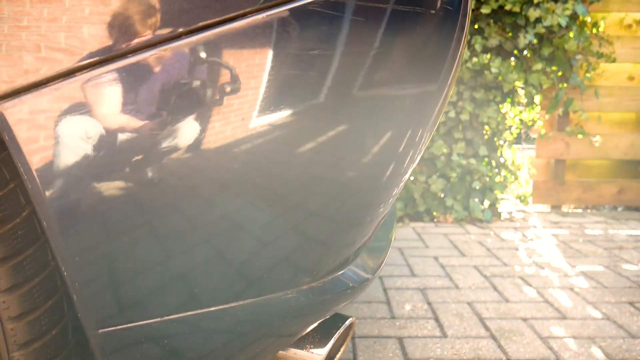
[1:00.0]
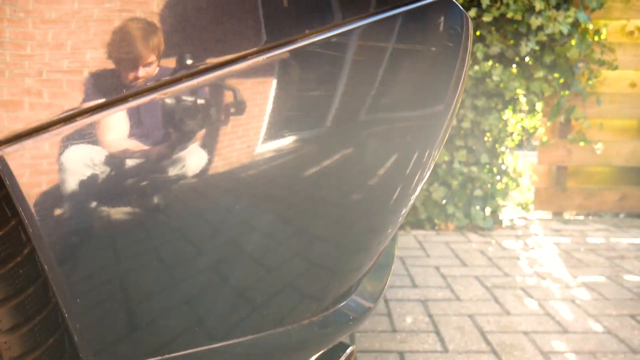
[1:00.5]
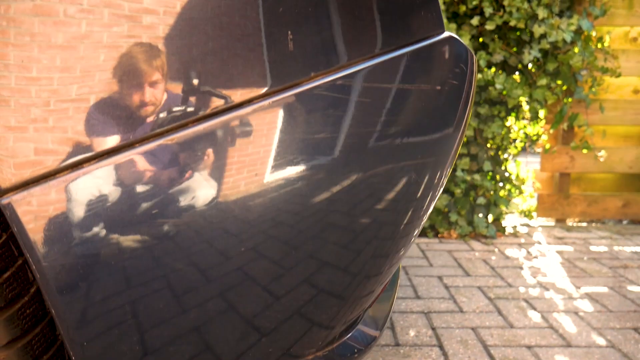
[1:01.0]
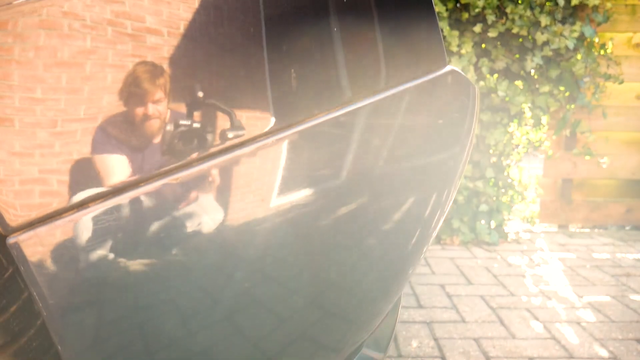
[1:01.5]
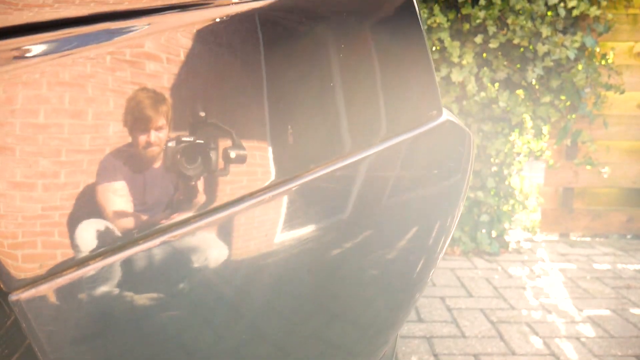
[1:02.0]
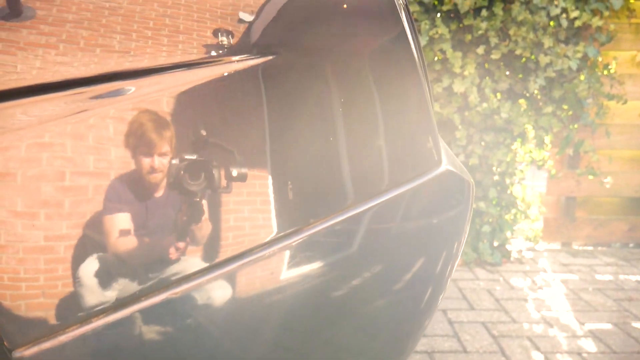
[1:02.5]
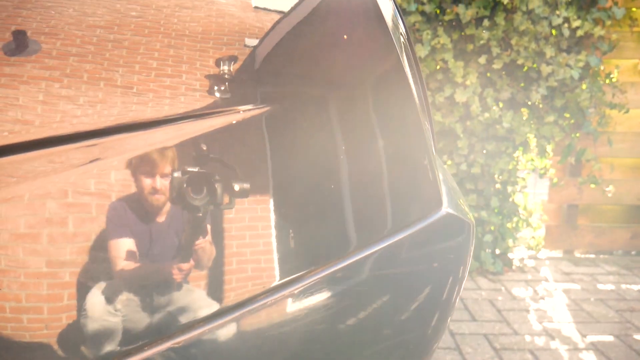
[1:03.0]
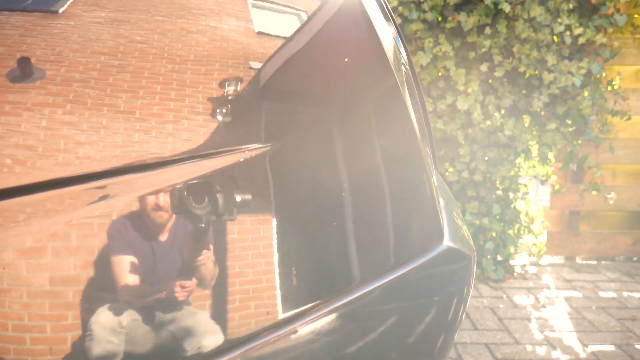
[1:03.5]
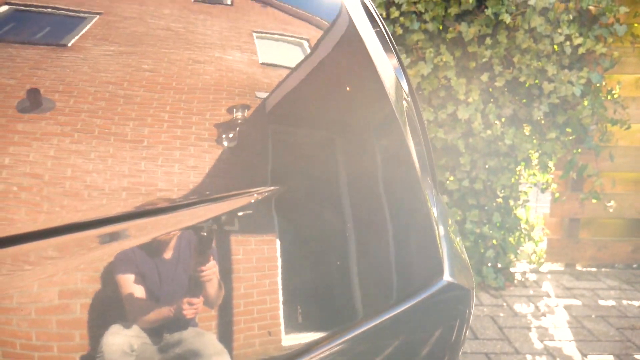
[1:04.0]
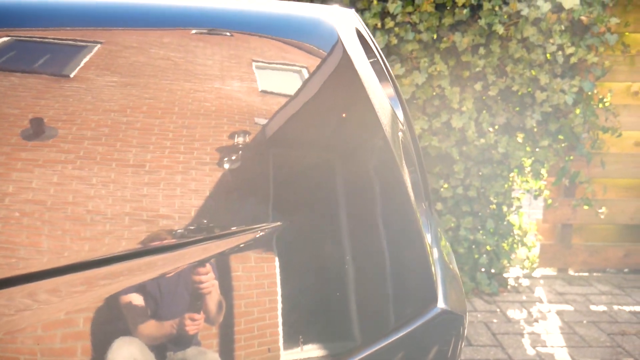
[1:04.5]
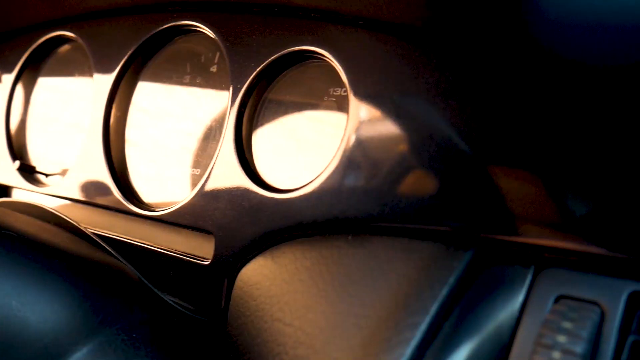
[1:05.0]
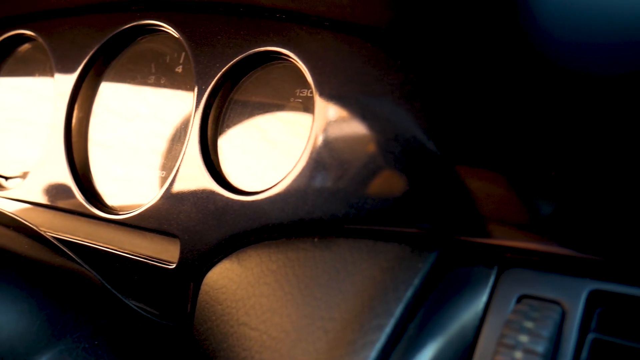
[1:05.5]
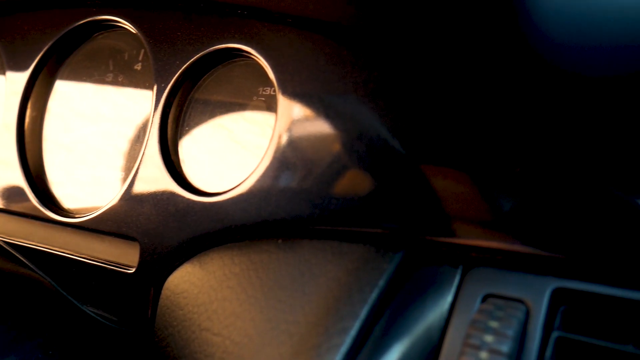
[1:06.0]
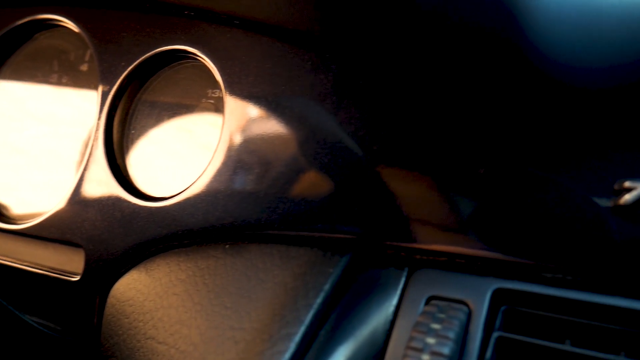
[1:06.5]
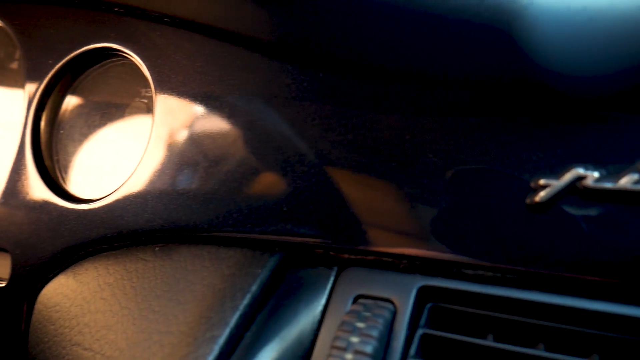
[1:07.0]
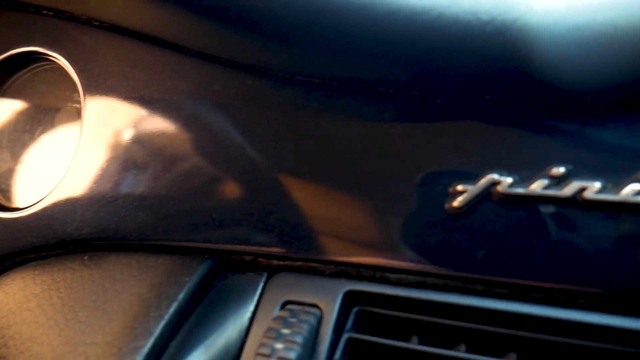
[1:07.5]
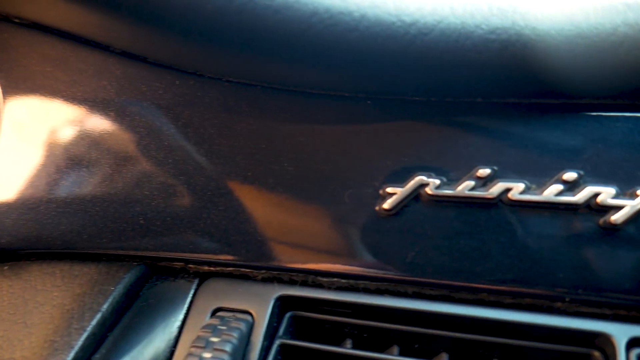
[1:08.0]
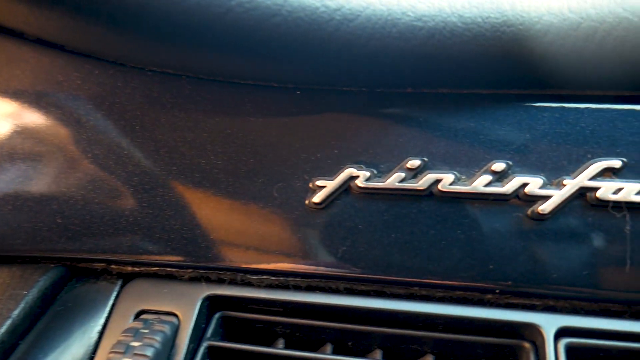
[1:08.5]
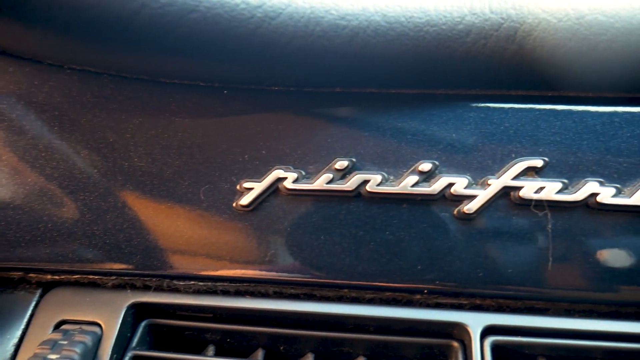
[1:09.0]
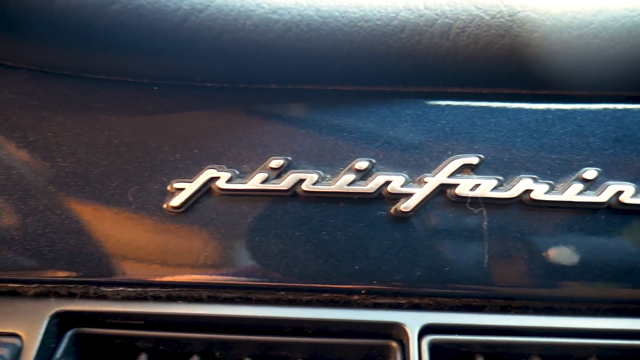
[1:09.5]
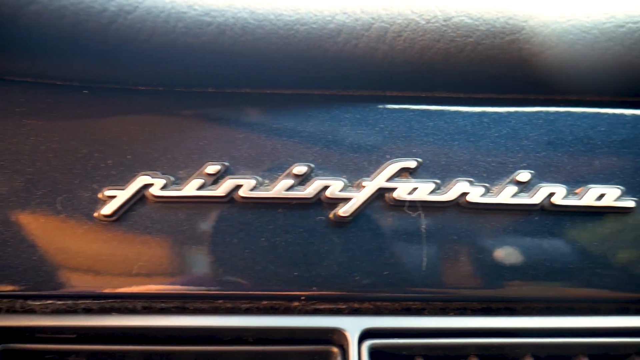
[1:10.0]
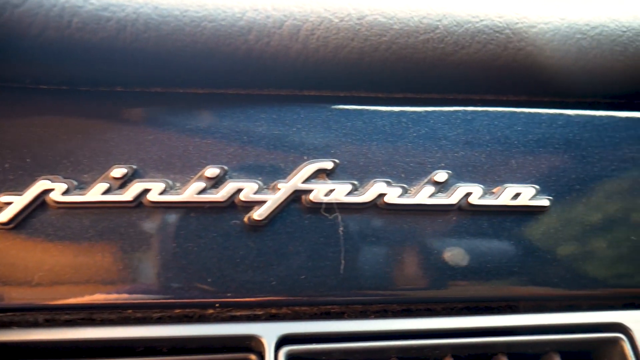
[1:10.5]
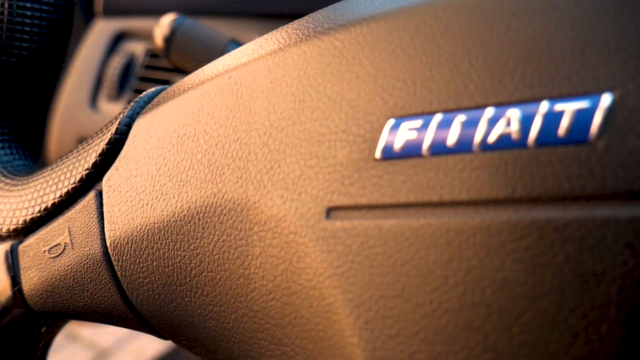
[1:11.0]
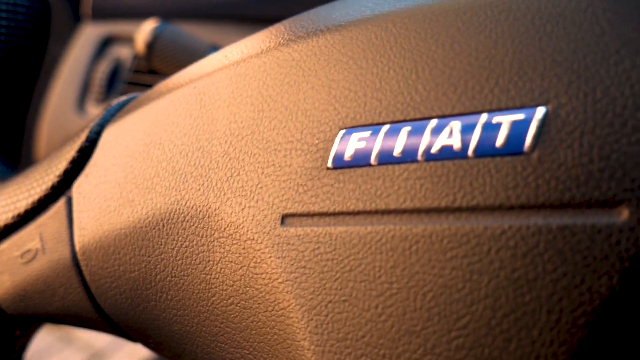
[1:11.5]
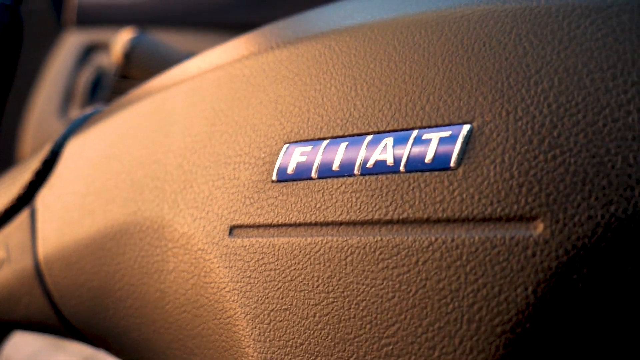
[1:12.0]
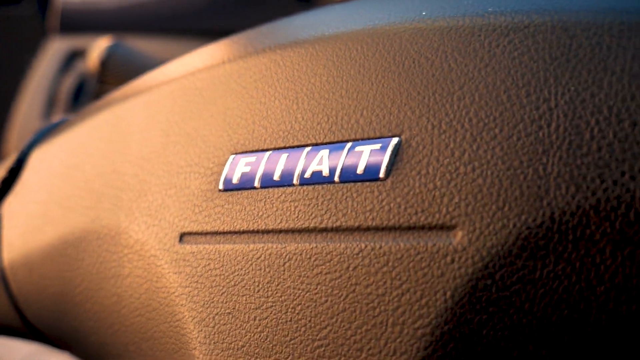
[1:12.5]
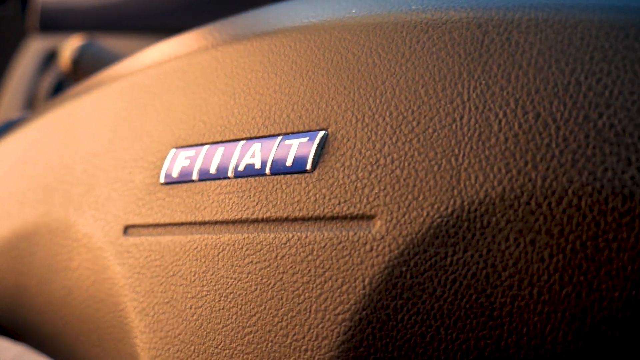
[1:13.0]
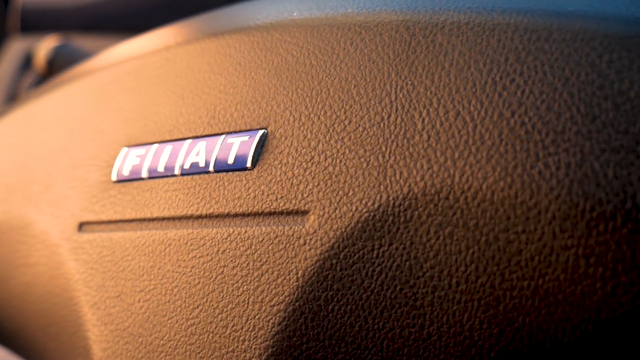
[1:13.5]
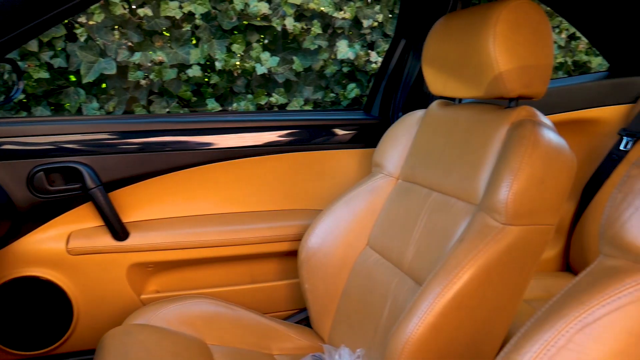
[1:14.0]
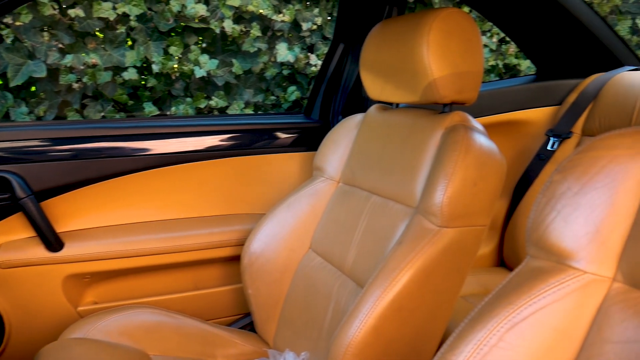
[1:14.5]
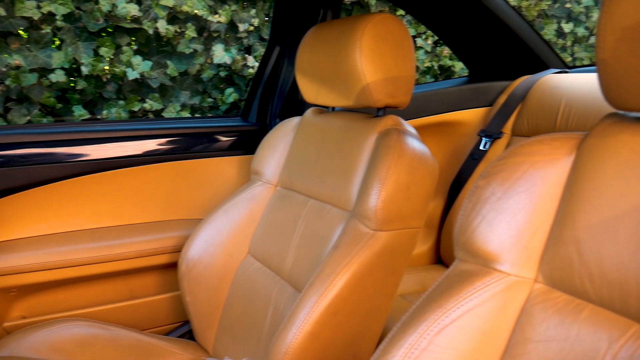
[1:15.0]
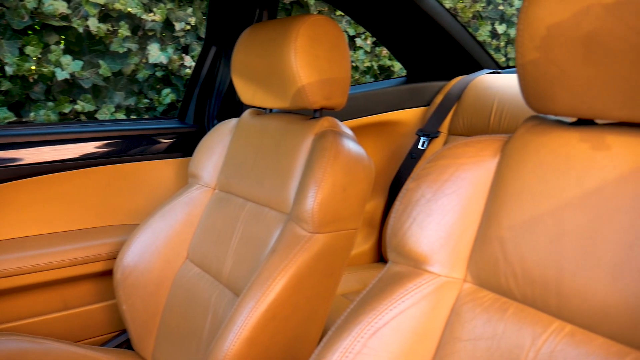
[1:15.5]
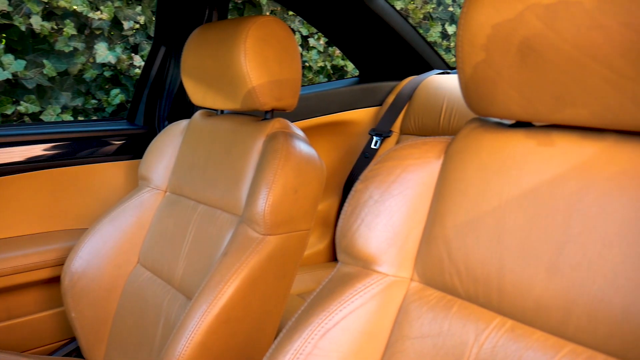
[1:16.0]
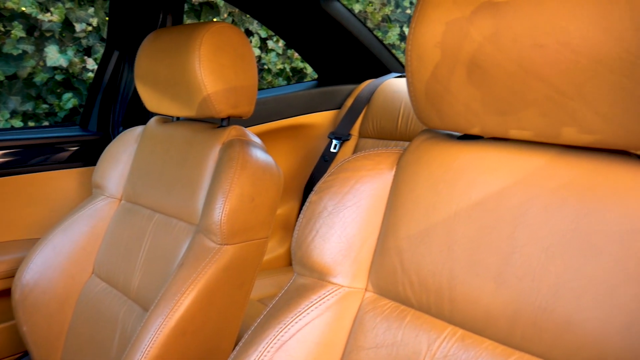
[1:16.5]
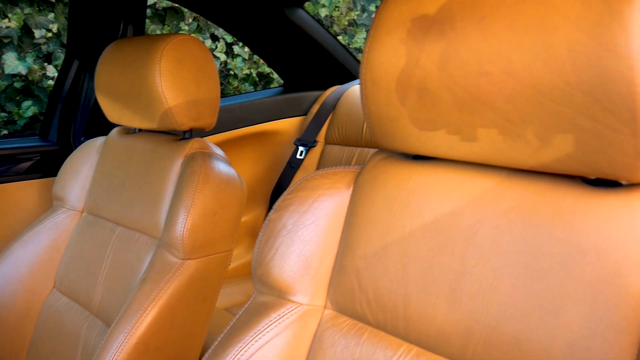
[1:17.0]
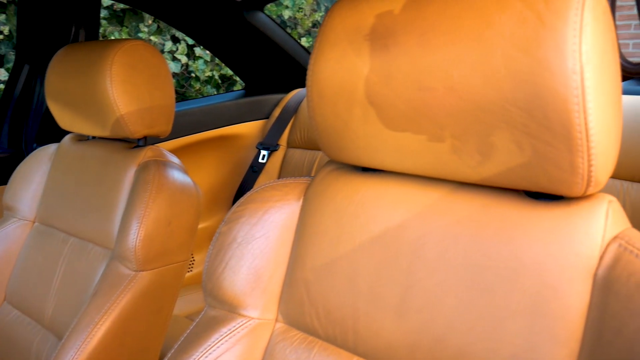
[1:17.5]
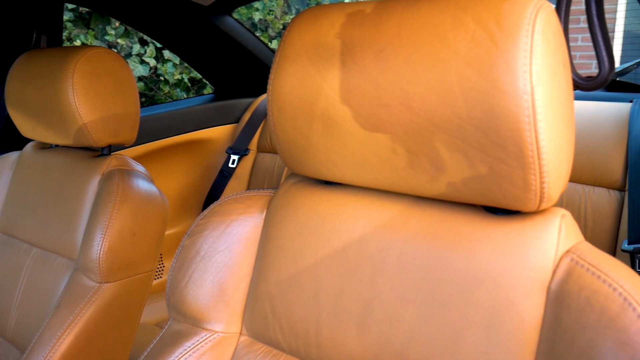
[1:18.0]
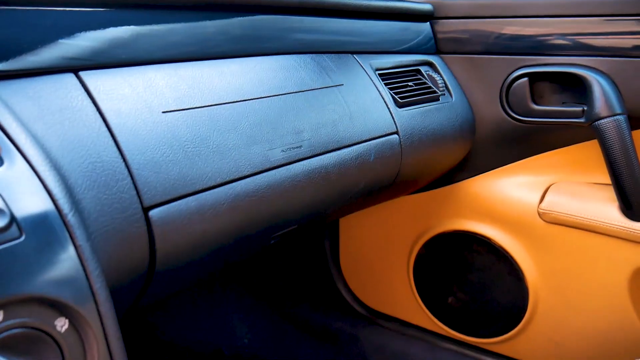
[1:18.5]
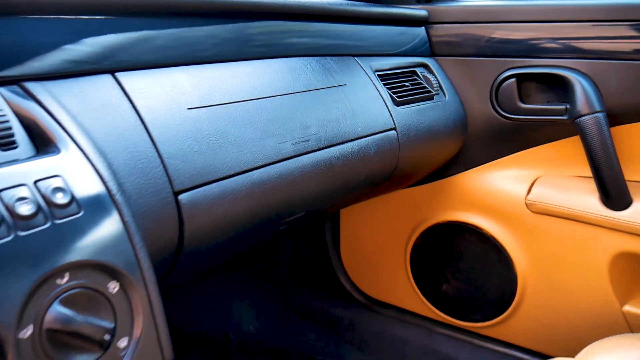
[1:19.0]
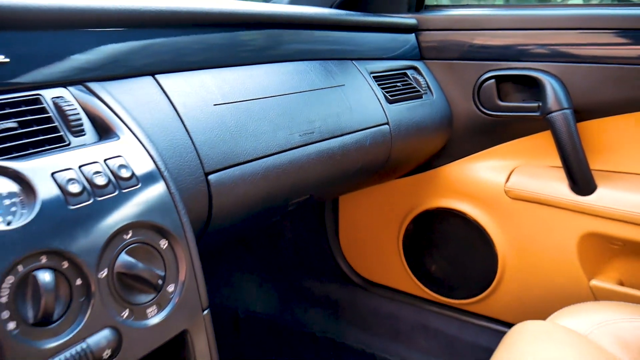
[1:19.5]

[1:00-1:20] The car is parked on pavers in the driveway, with an ivory wall and possibly some type of privacy fence gate. The bottom of the car and the tires are filmed, and in the reflection a male is visible filming, with a camera or a pole in his hand. He is probably in his 30s, has a beard and hair that comes down to his eyebrows, and wears a t-shirt and jeans. He slowly stands. The video then moves to the interior of the car, showing the dashboard where the gauges are: four circles of different sizes, with something like an emblem on it, and something about Fiat. The interior looks to be beige leather; the top of the car around the windows is all black, the lower part of the doors with the door storage is beige, and the dashboard looks all black, with what looks like a red button somewhere on it.